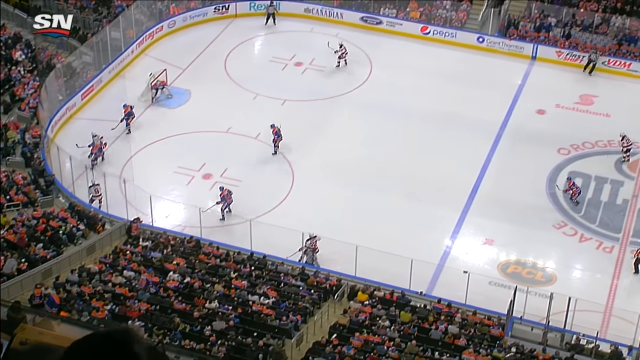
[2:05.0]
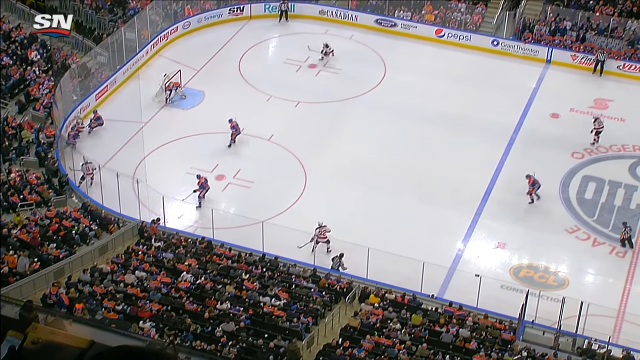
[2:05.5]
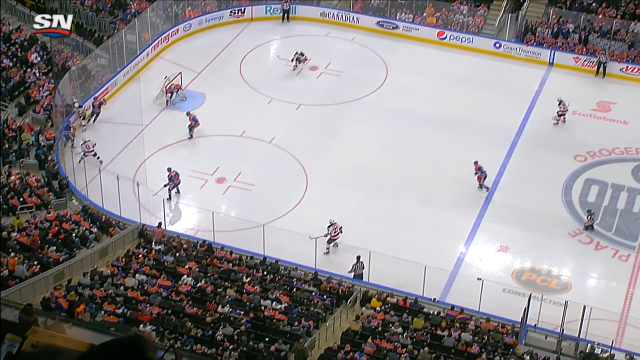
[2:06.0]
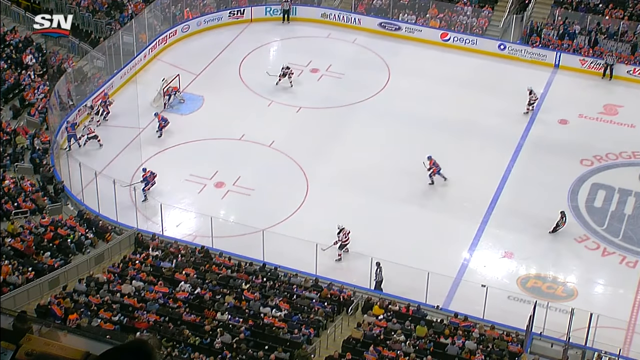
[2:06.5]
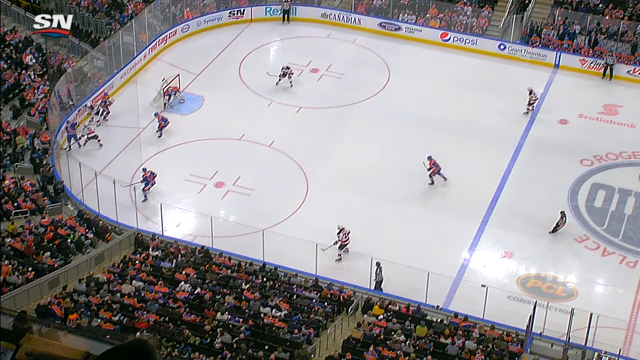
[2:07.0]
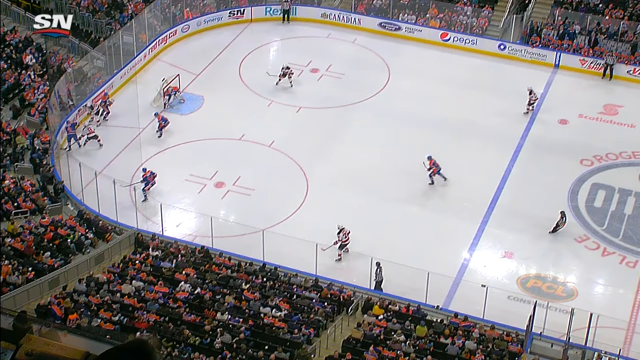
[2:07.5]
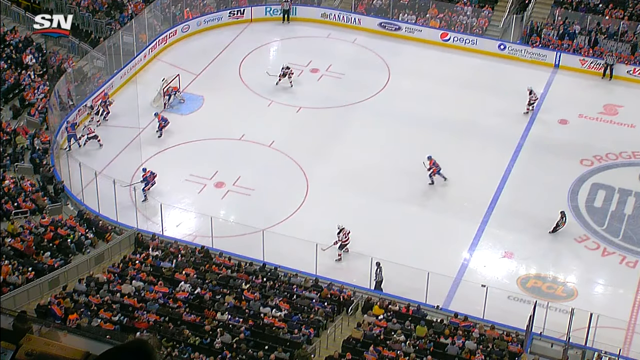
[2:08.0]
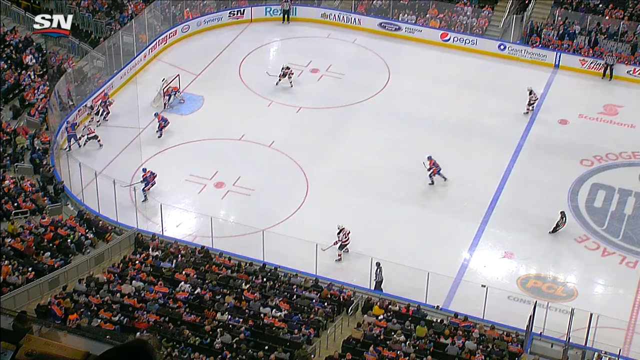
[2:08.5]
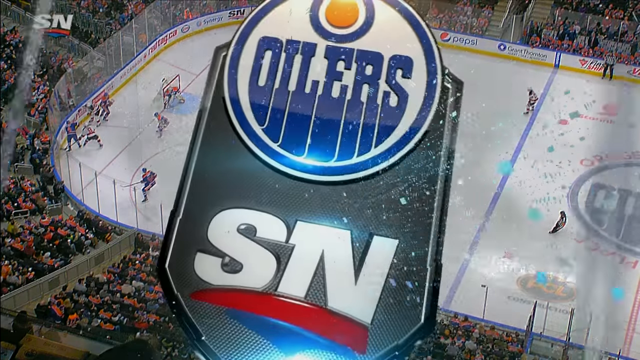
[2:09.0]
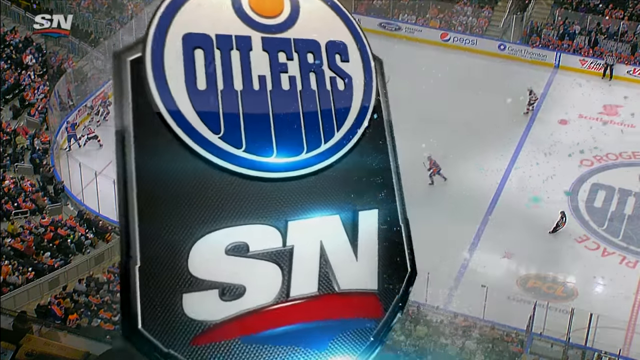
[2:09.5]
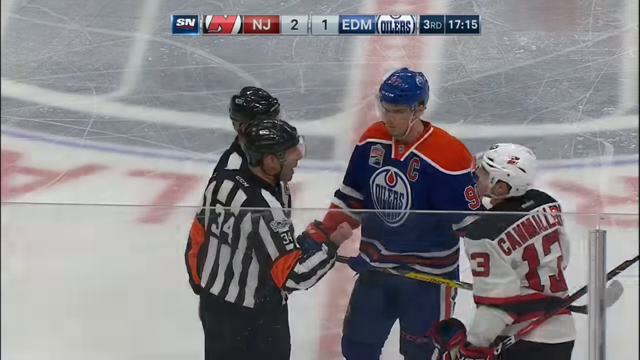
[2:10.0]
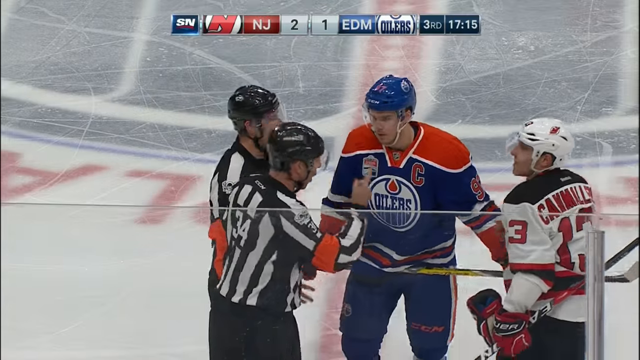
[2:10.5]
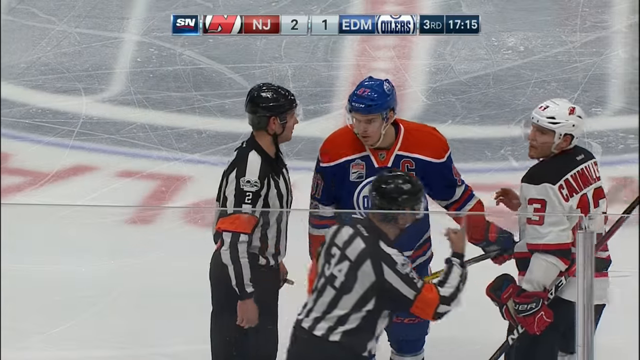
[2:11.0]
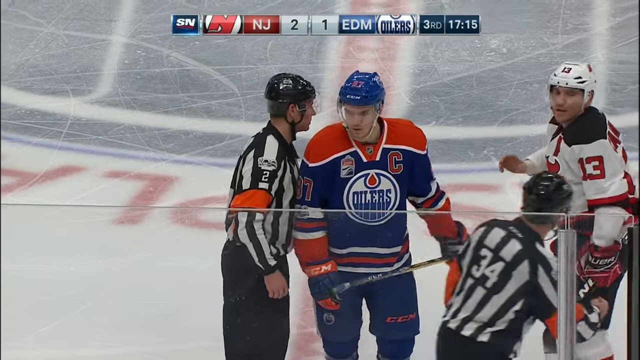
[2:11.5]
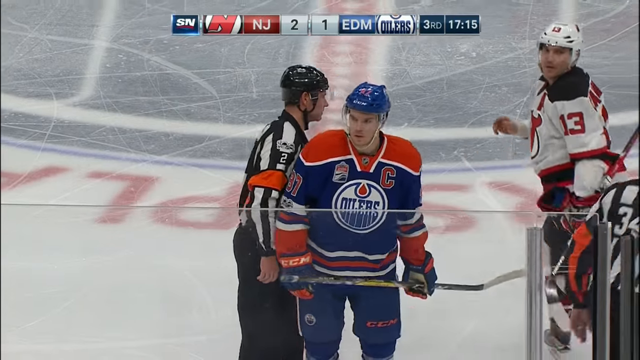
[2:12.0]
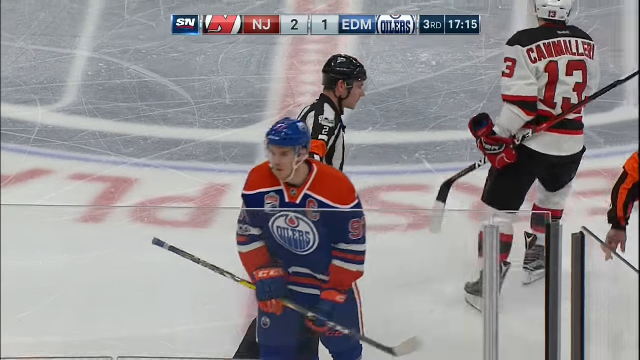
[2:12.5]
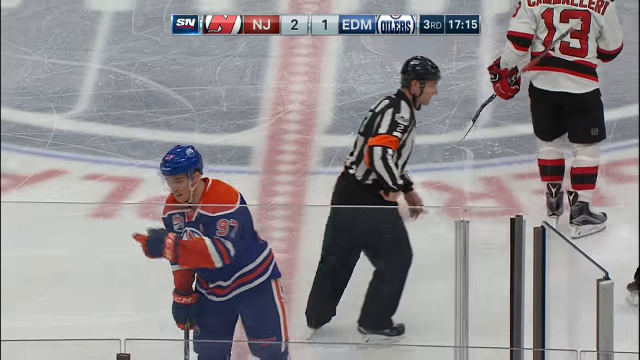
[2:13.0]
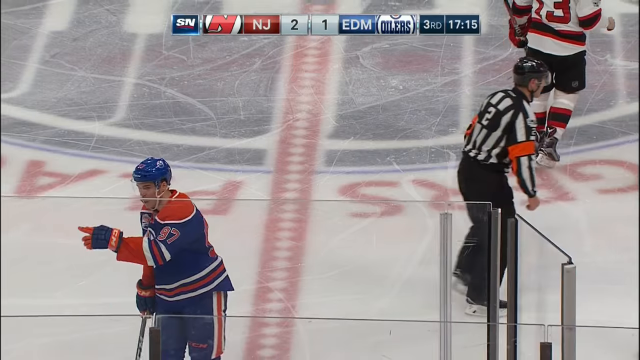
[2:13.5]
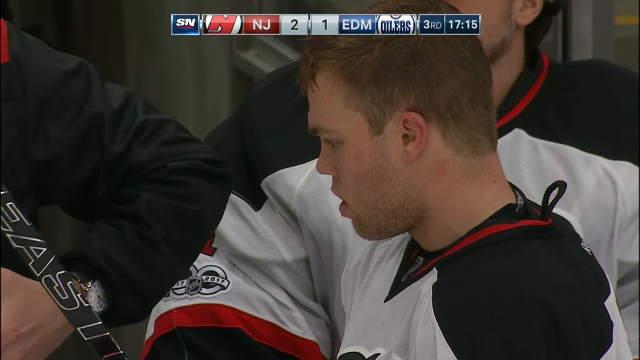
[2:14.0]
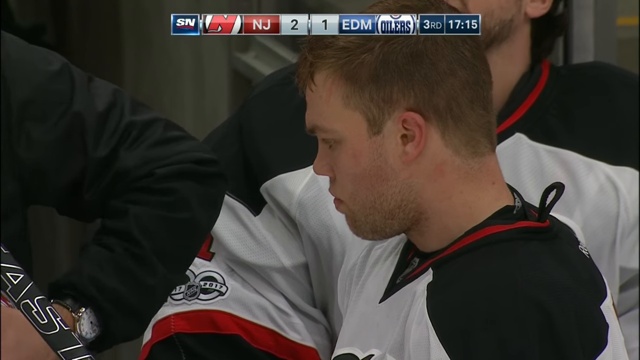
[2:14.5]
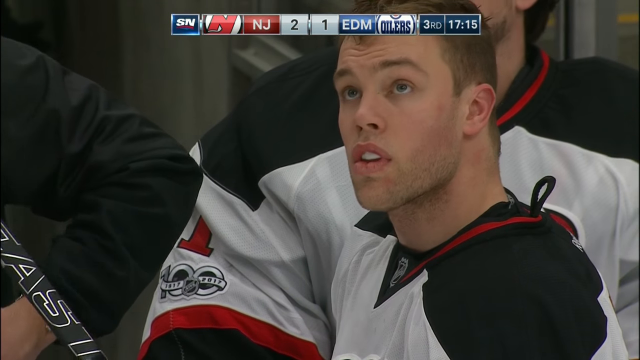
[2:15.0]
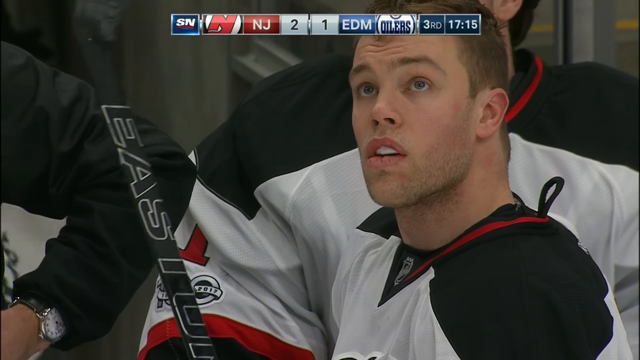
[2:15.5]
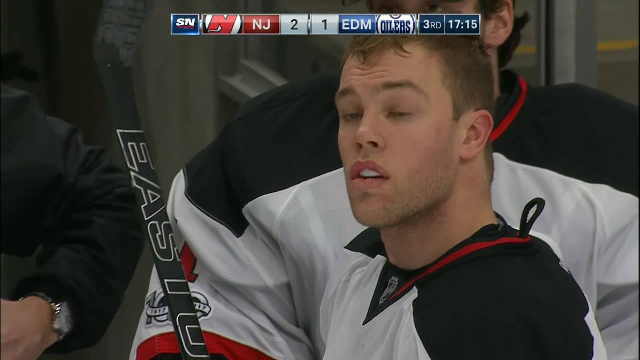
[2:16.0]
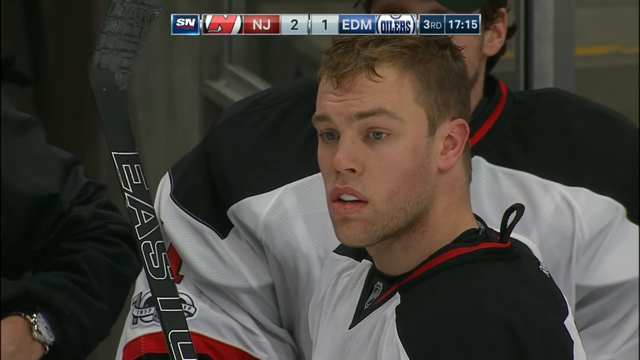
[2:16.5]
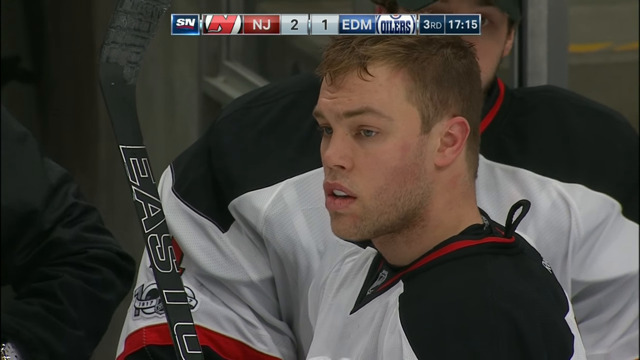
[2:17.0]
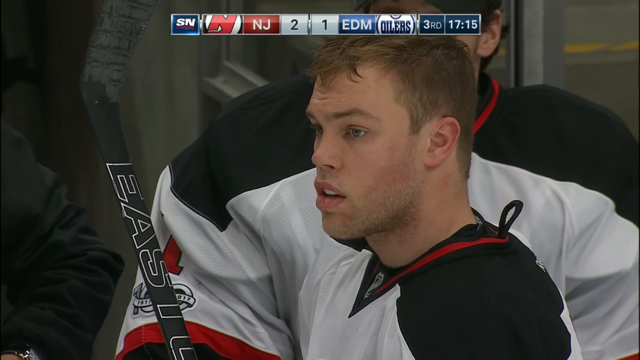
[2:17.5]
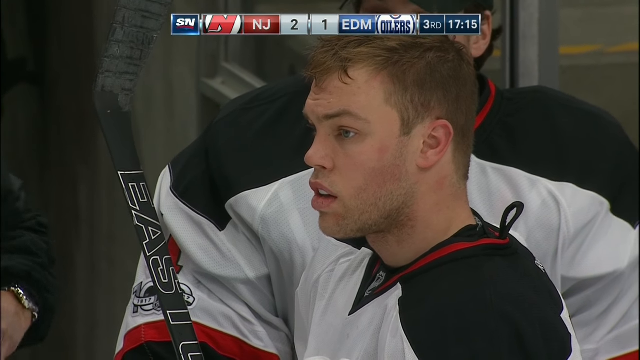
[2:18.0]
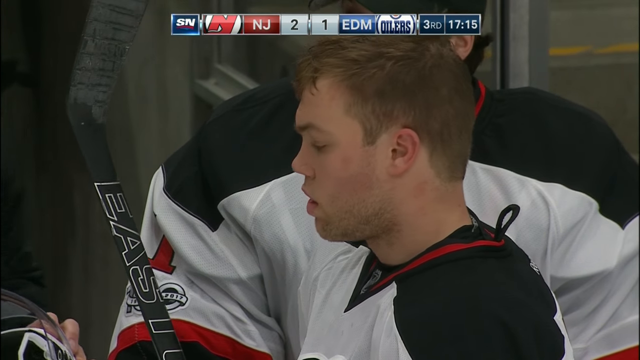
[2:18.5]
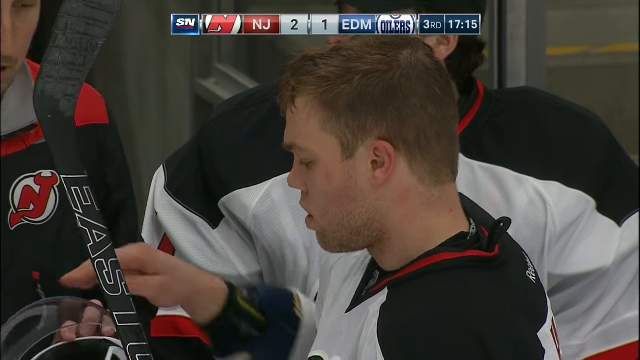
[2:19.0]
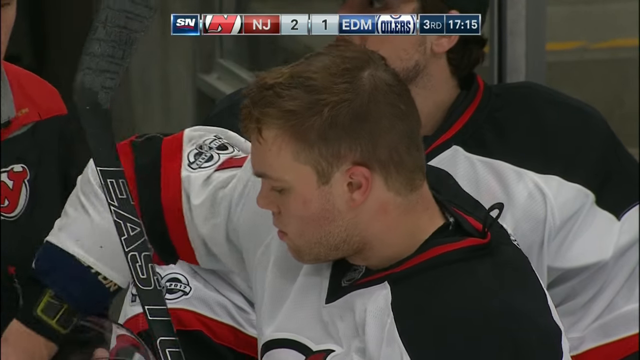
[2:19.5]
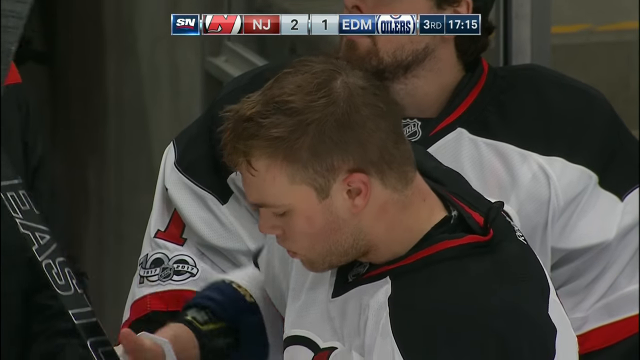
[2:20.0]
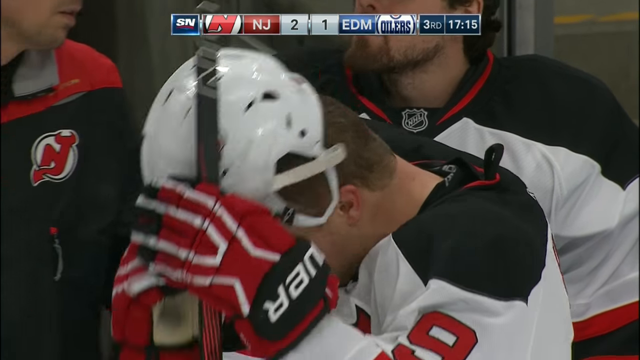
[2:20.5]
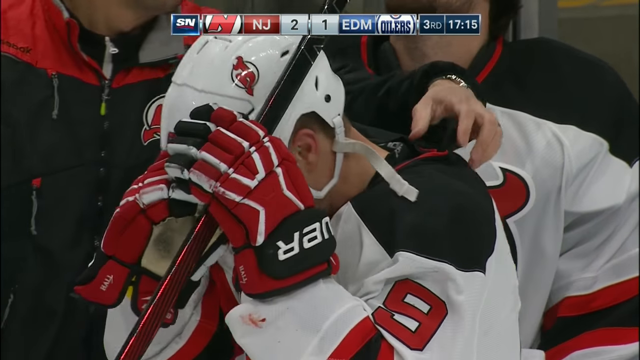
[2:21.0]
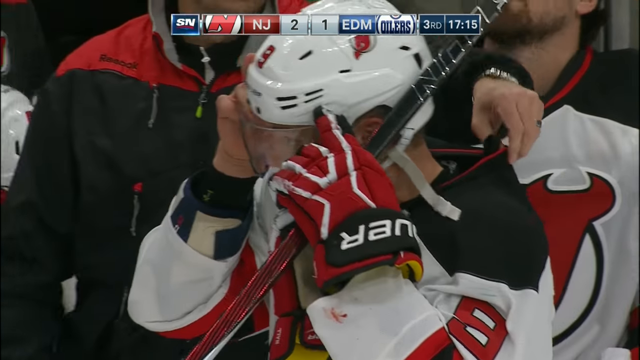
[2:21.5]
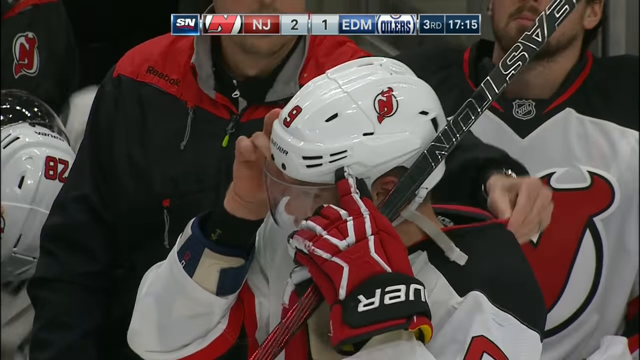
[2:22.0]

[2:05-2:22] A veteran Oilers player throws three punches into the face of another player, who tries to put his hand up to block and move out of the way. The Oilers talk it over on their bench at center ice. The score shows New Jersey up two to one over the Edmonton Oilers. The New Jersey Devils captain is shown.